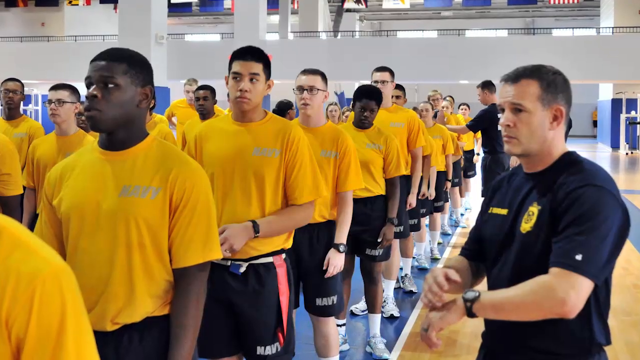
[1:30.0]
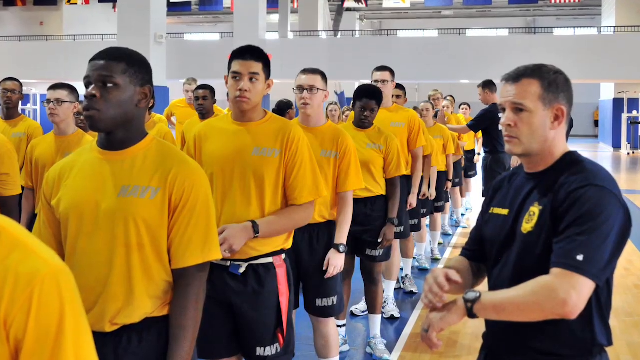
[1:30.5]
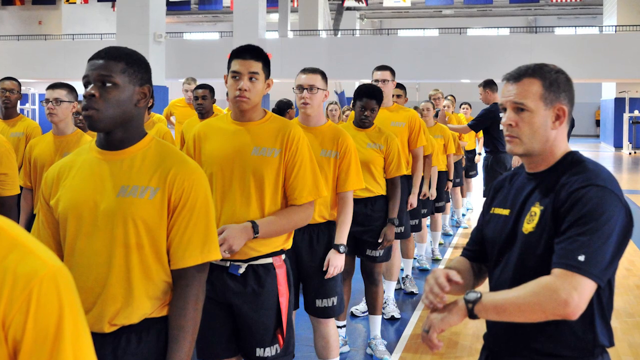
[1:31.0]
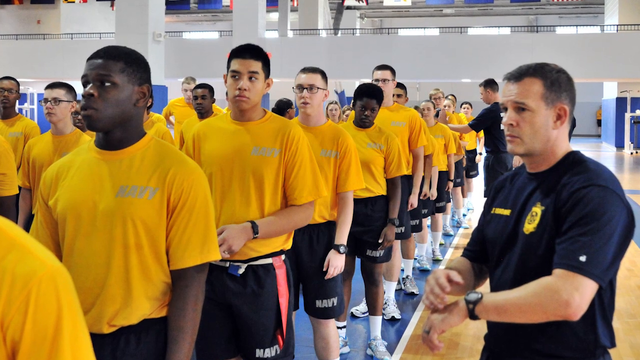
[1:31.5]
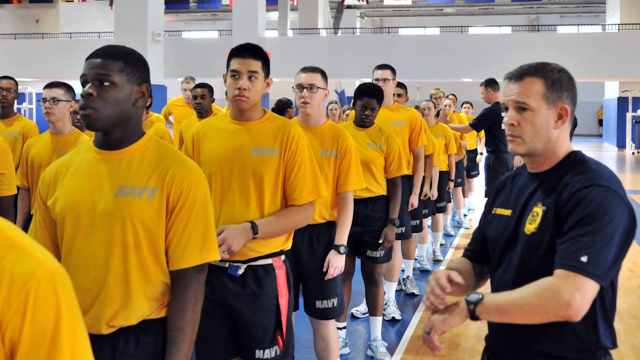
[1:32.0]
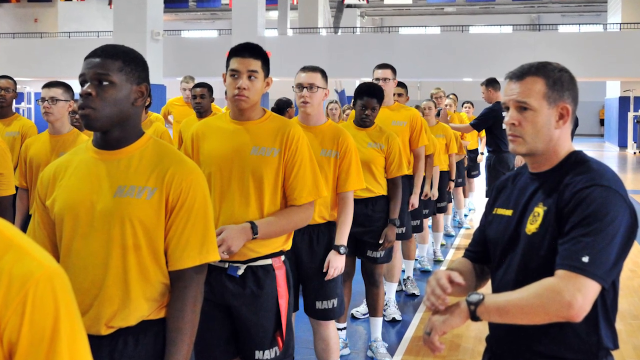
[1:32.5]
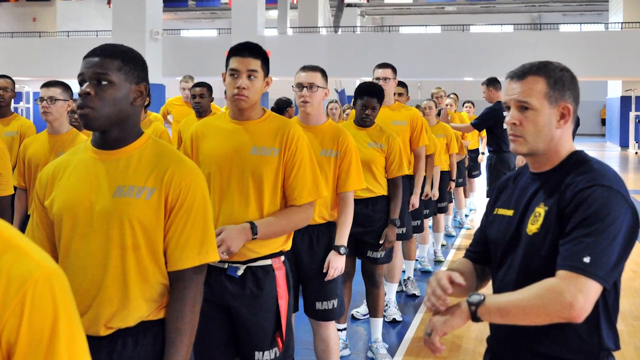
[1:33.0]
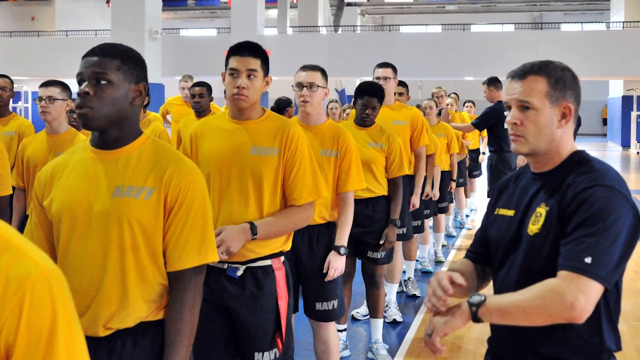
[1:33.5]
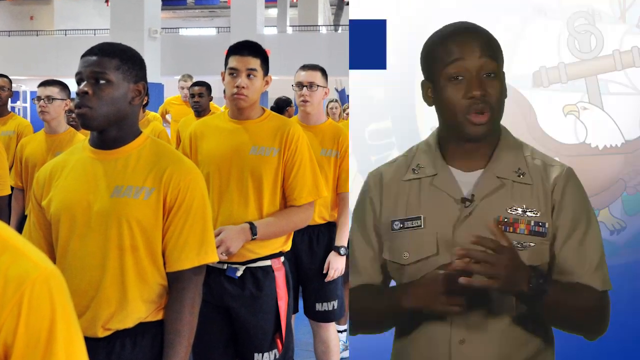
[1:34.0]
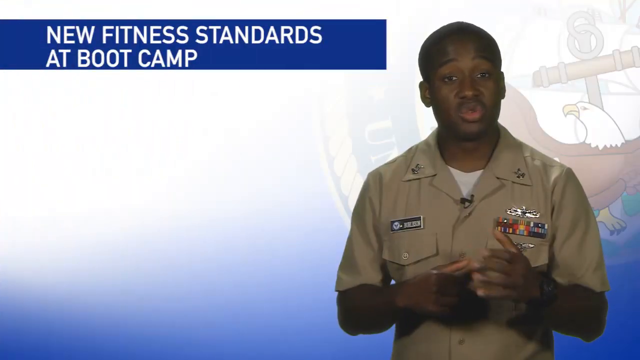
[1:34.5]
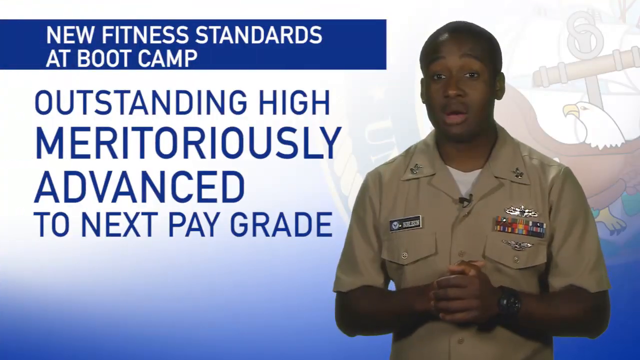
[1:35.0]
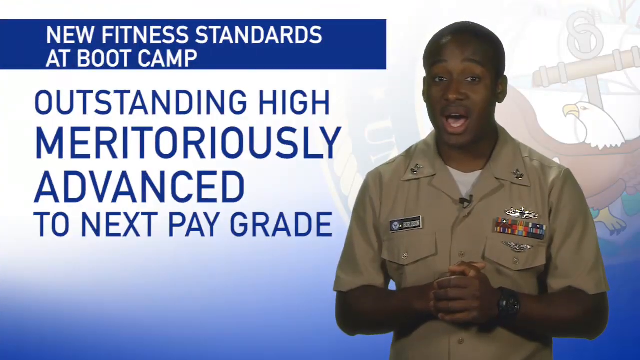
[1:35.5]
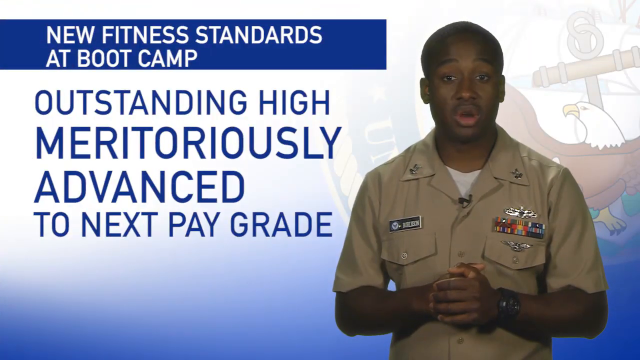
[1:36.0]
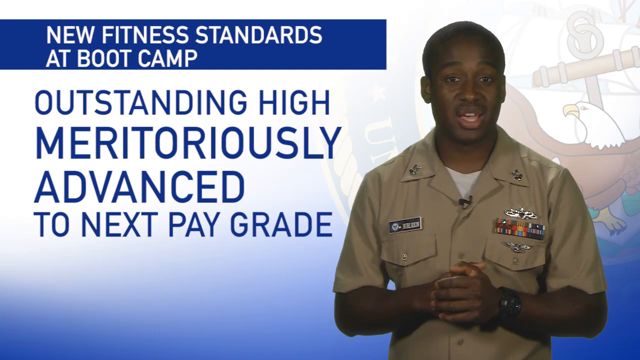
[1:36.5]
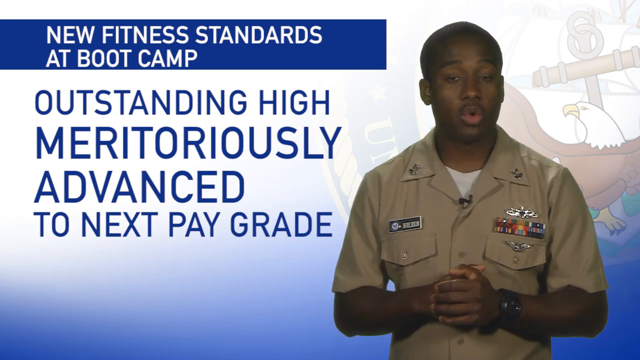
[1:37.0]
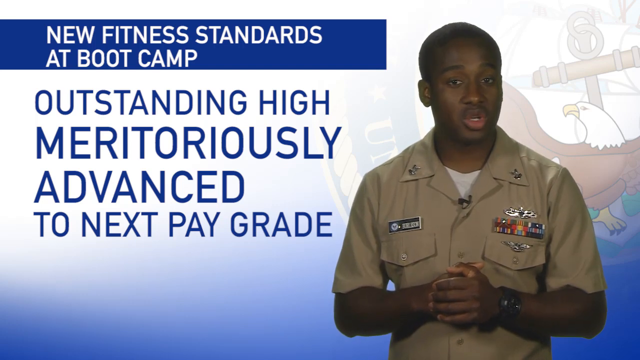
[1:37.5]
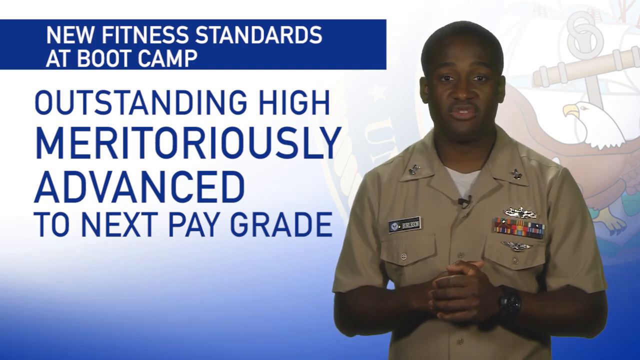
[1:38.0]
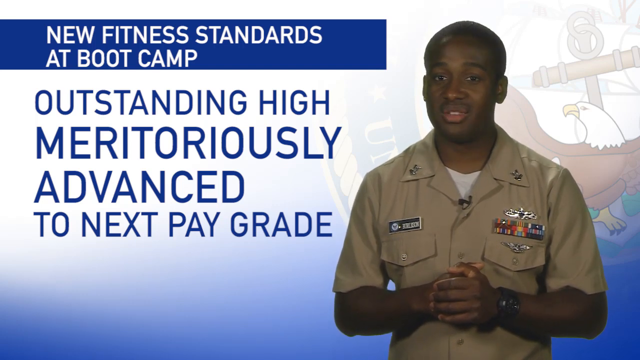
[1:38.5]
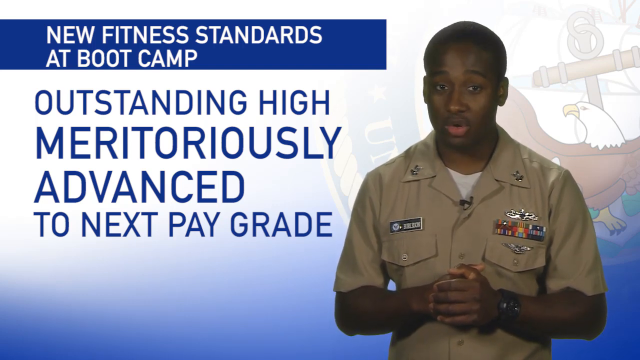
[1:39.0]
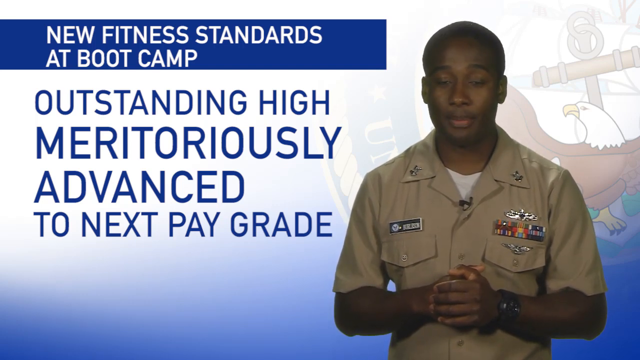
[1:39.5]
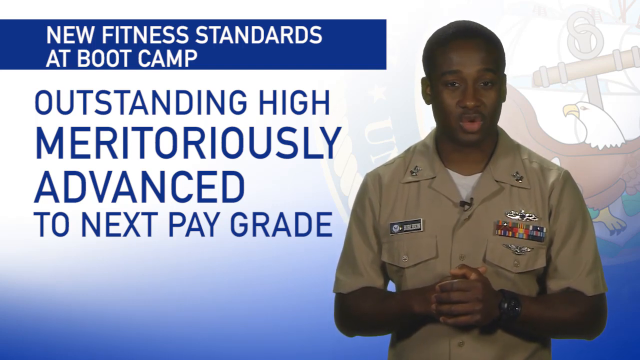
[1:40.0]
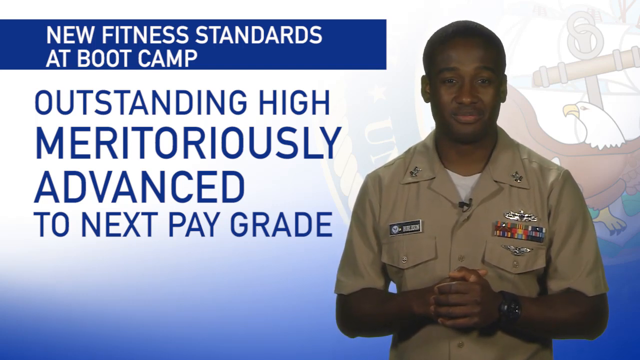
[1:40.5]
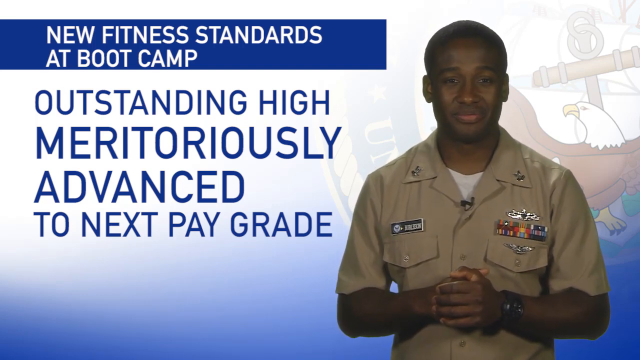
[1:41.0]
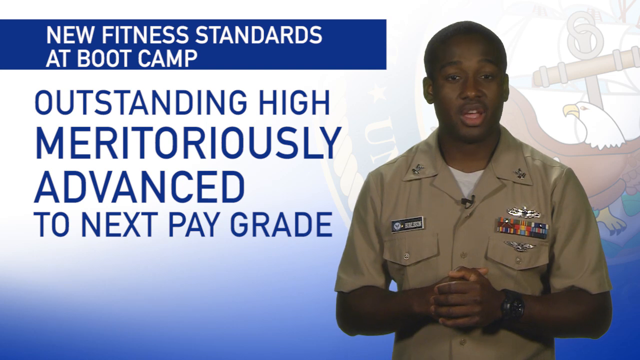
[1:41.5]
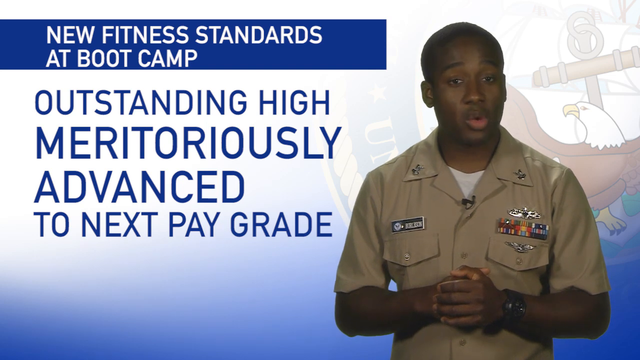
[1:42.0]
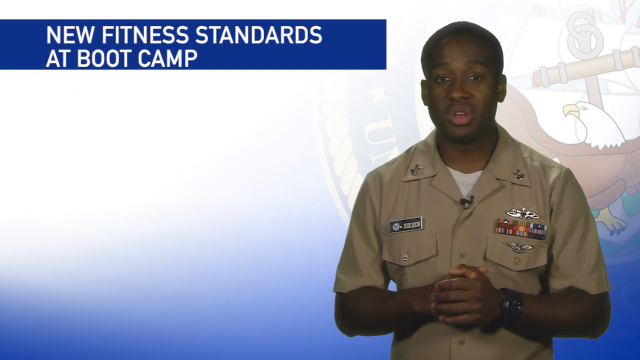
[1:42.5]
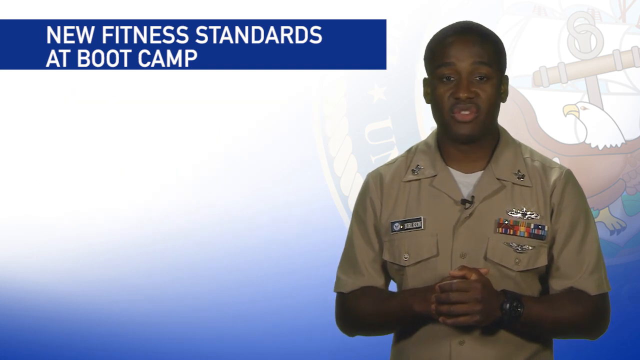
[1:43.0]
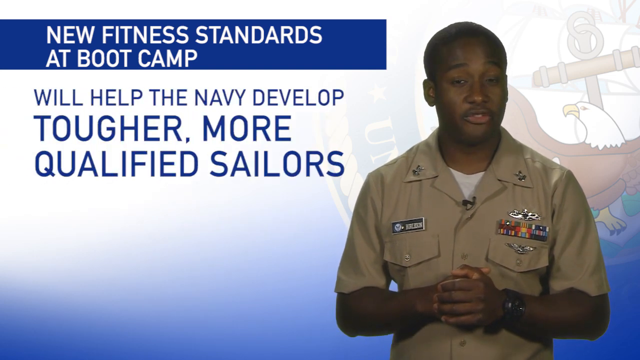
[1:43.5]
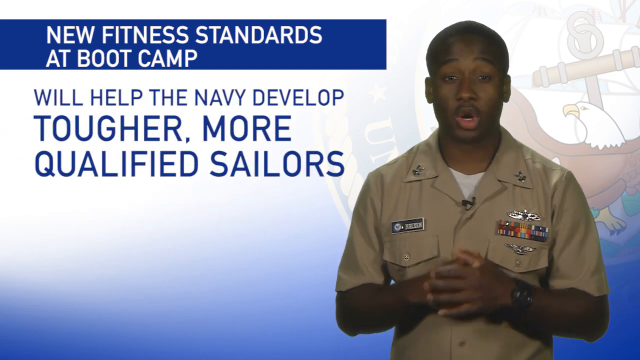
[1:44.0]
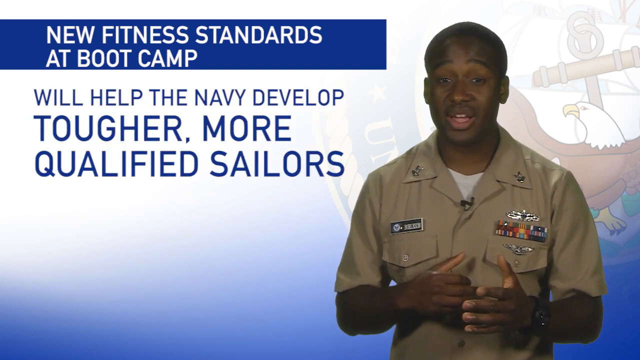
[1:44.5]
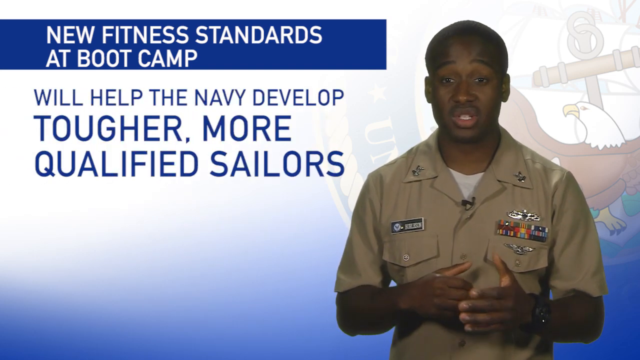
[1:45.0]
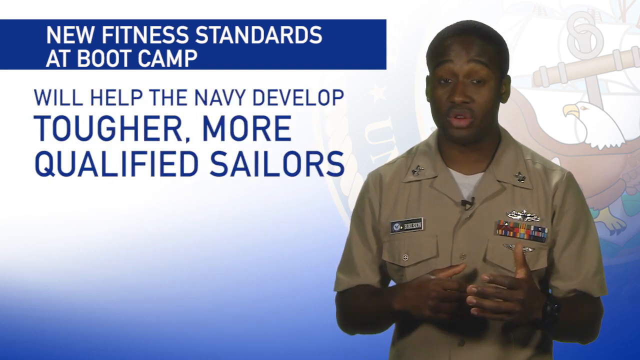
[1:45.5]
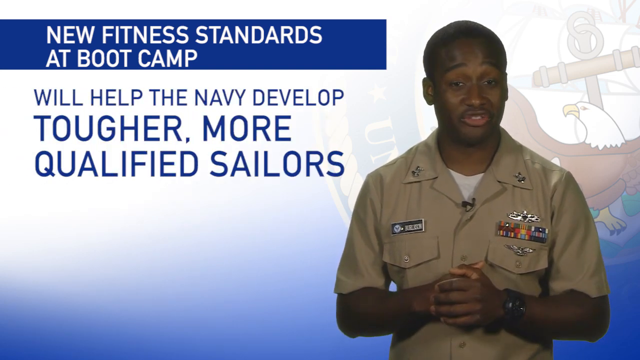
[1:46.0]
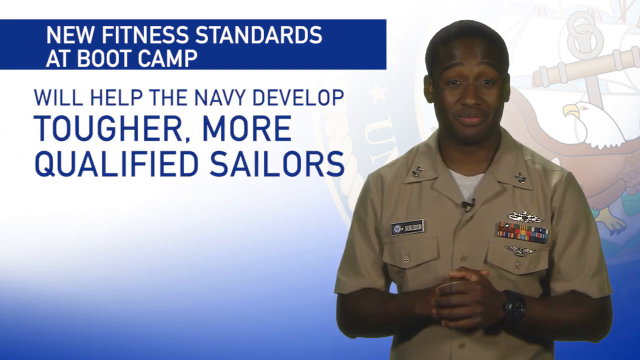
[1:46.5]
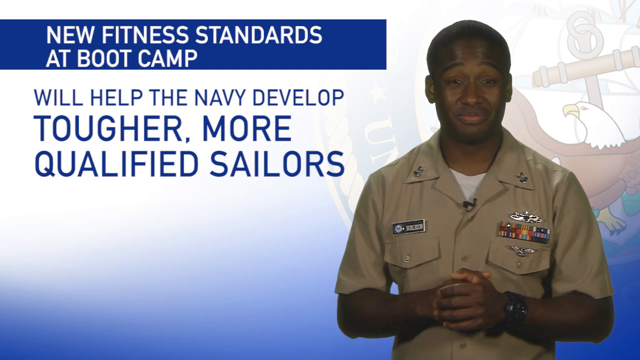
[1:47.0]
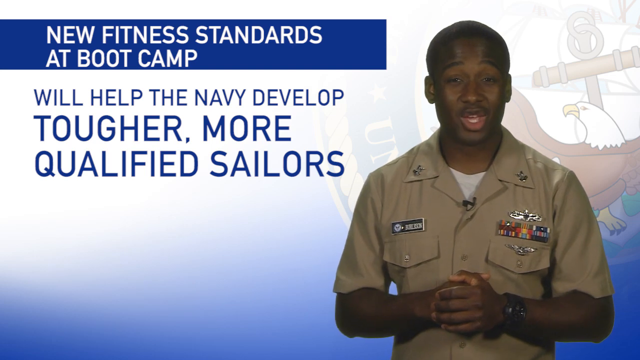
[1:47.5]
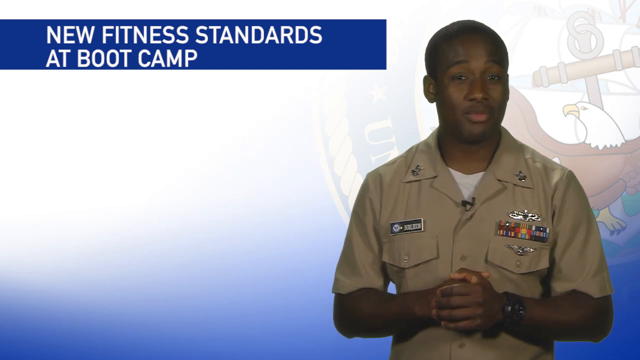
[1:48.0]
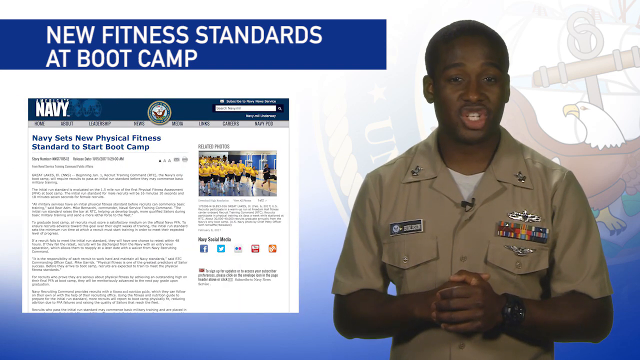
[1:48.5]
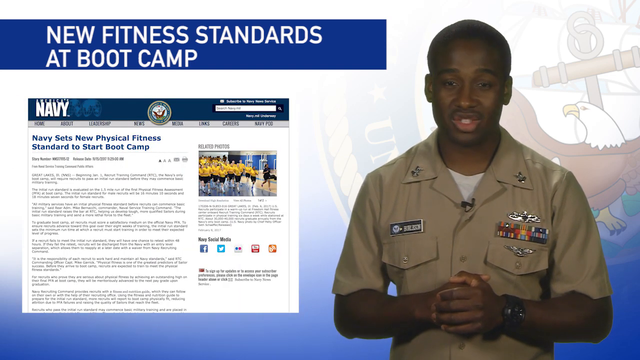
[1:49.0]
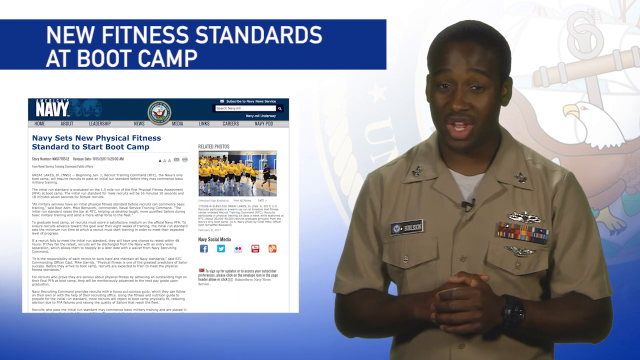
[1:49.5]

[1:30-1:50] A group of army recruits in yellow t-shirts and dark shorts are in a gym, with instructors all around looking at their watches, timing them. The gym has a white background and is lit up pretty well. The recruits seem to be standing on some mats, with what is like a basketball court on the outside. The camera pans in a little in a zoom effect. The video then cuts to a young Black man with a buzz cut wearing a brown army shirt with medals and his name, with an American government logo with an eagle in the background. Text reads "new fitness standards at boot camp," and underneath, in bigger letters, "outstanding high meritoriously advance to next pay grade." The man has his hands in a praying position. The next text reads "will help the navy develop tougher more qualified sailors." A Navy website then opens up on the left of the screen with the headline "Navy sets new physical fitness standard to start boot camp"; it seems a long article, and the man is still talking.